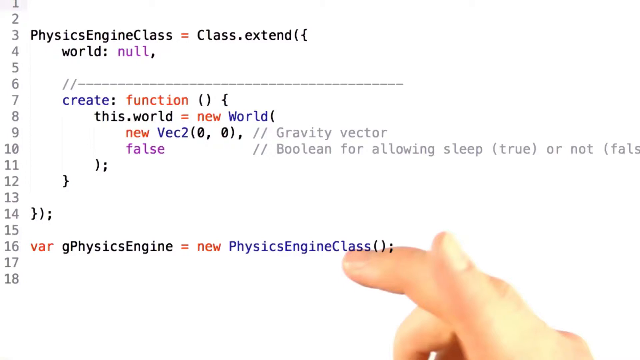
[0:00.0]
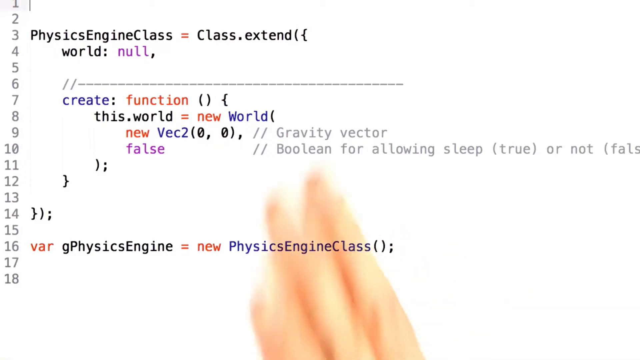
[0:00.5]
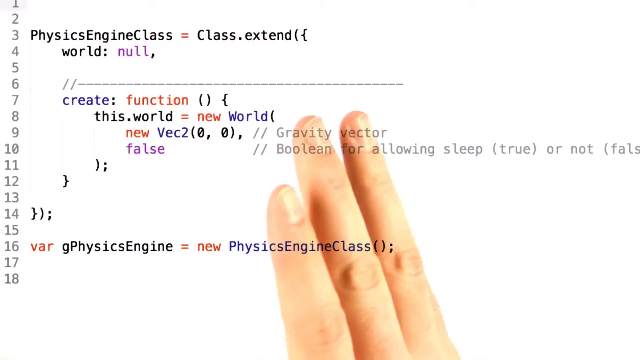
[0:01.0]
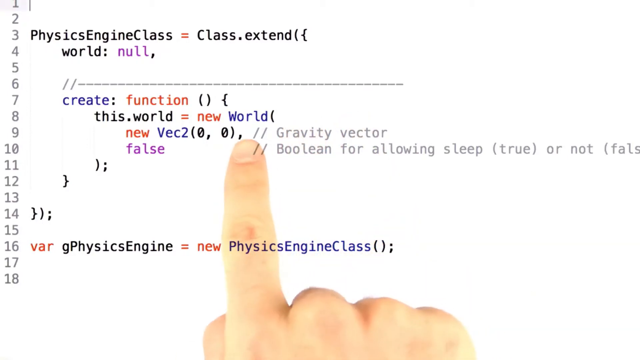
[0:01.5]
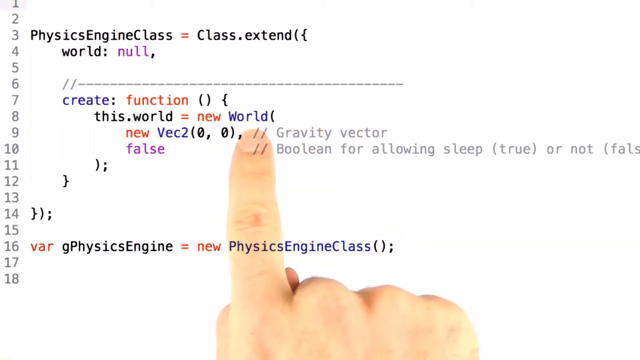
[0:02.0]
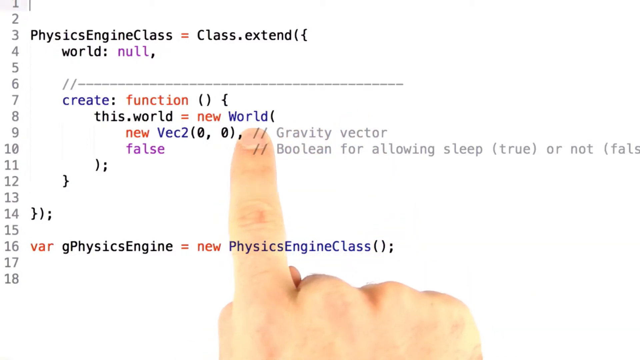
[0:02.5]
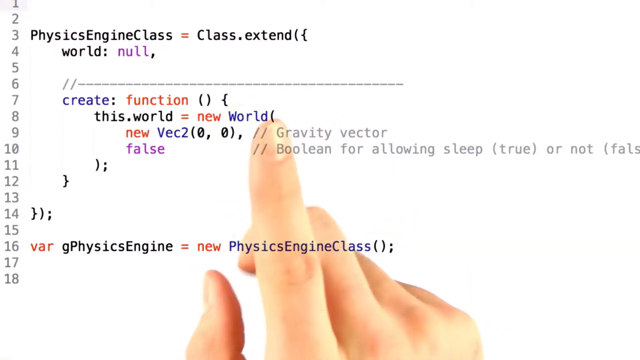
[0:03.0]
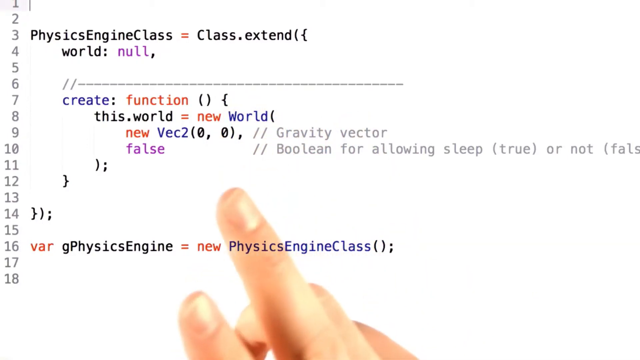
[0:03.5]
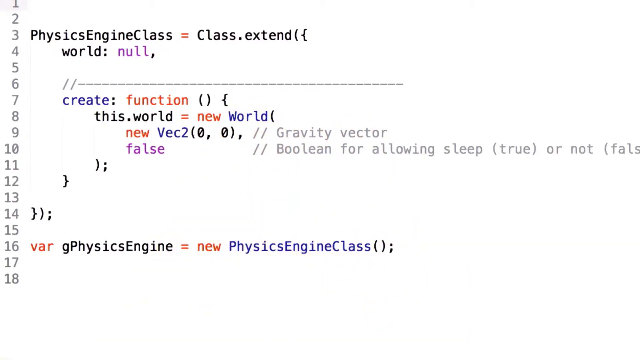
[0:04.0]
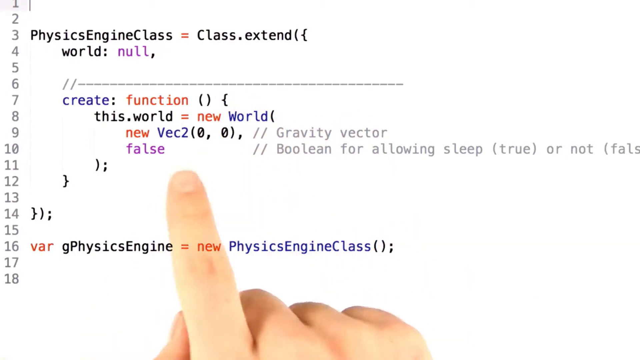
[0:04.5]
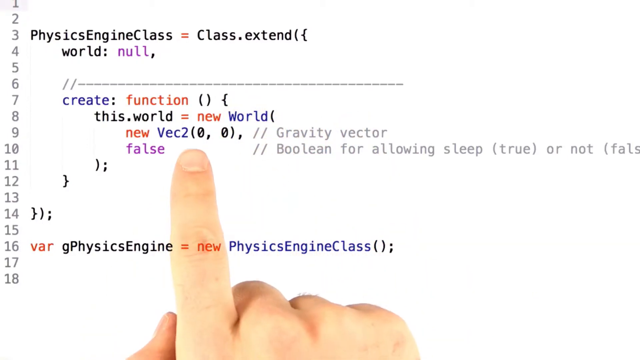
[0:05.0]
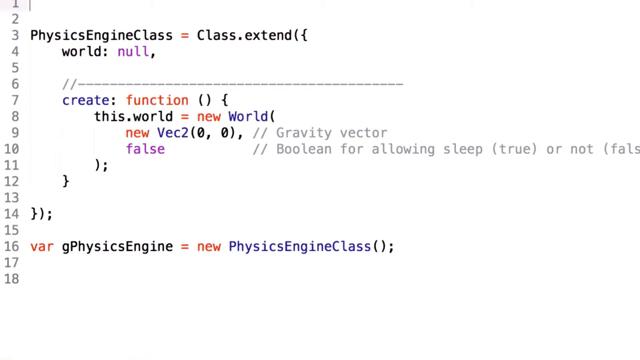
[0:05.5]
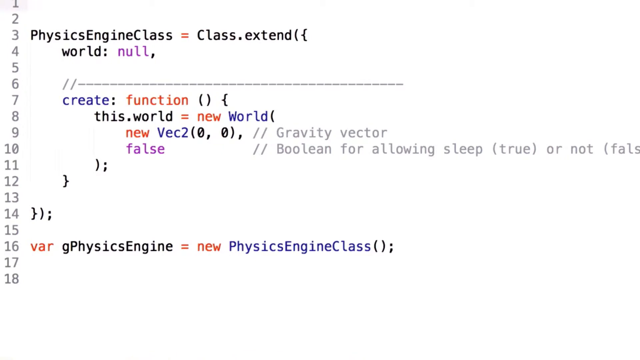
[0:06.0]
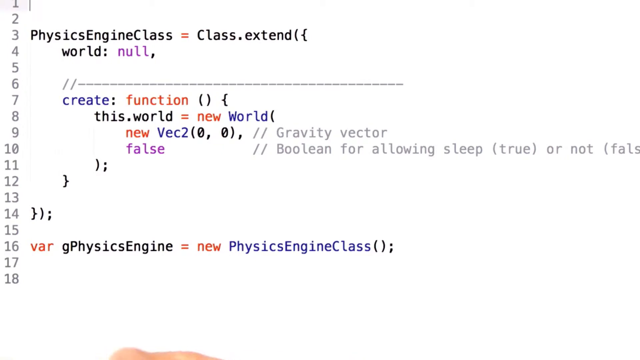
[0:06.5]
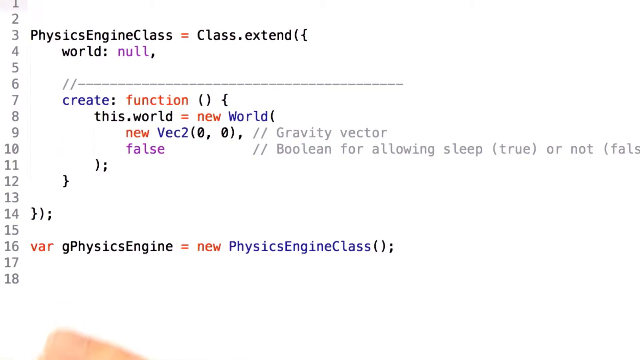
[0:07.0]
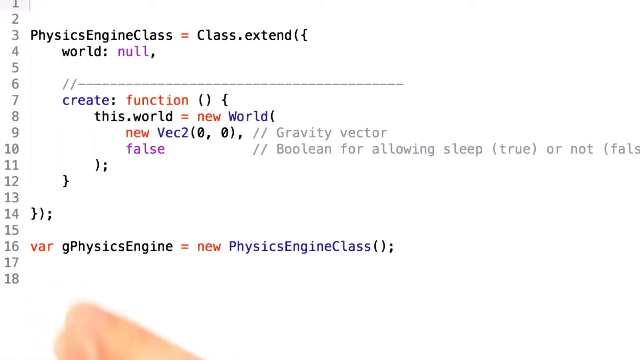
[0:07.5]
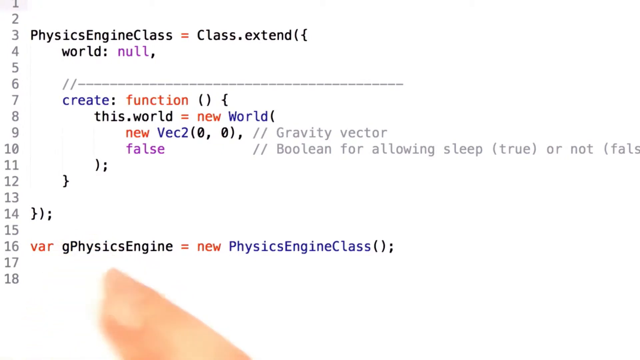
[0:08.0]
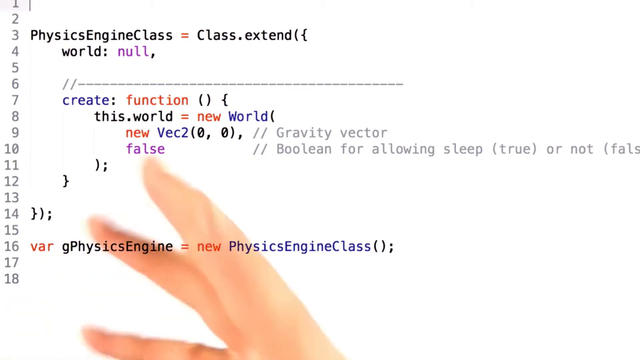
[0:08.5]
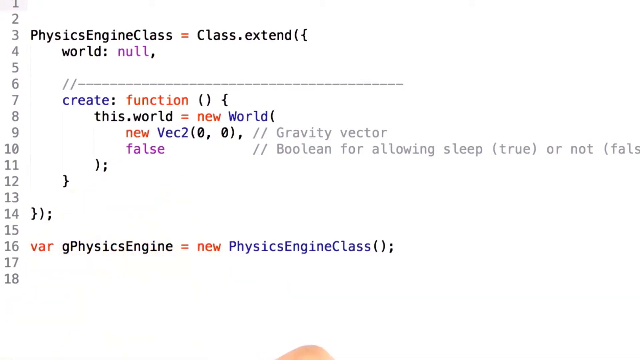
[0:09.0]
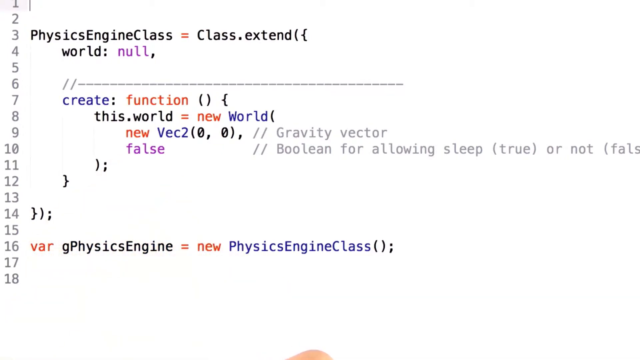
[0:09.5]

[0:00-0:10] A coding terminal with a white background and line numbers on the left displays code that appears to be JavaScript. It creates a class called PhysicsEngineClass, which equals class.extend. World is set to null, and a function within the class contains this.world equals new world, with a new vector and a false boolean in it. Underneath the entire class, a variable called gPhysicsEngine is initialized to equal new PhysicsEngineClass. A hand in the background, behind the code, points to various sections: first the this.world equals new world object initialization, then the new vector, and then the variable declared at the bottom of the screen.